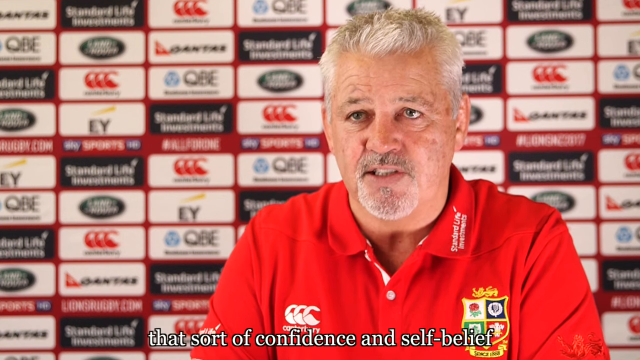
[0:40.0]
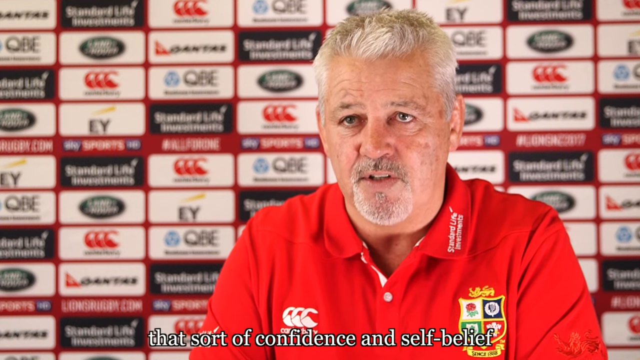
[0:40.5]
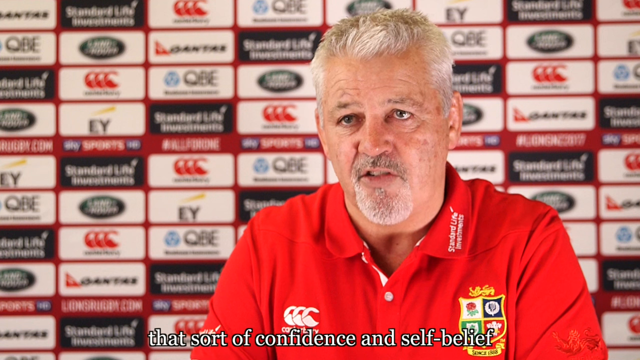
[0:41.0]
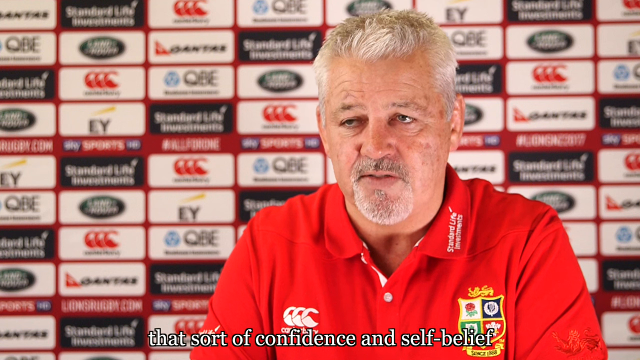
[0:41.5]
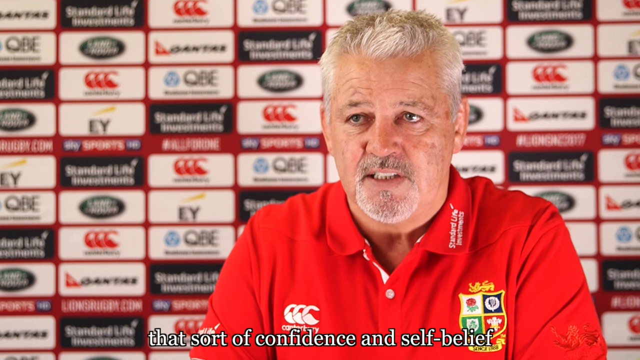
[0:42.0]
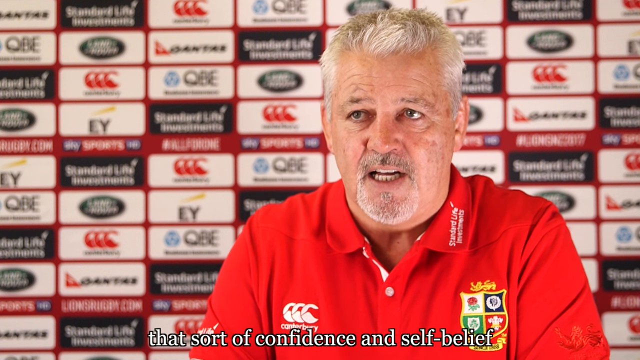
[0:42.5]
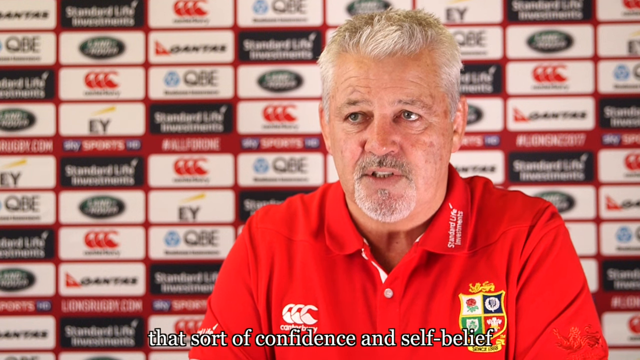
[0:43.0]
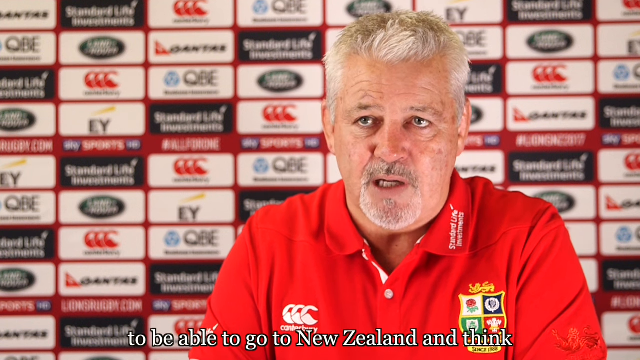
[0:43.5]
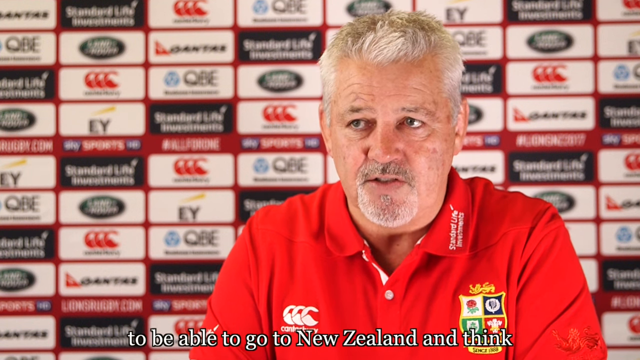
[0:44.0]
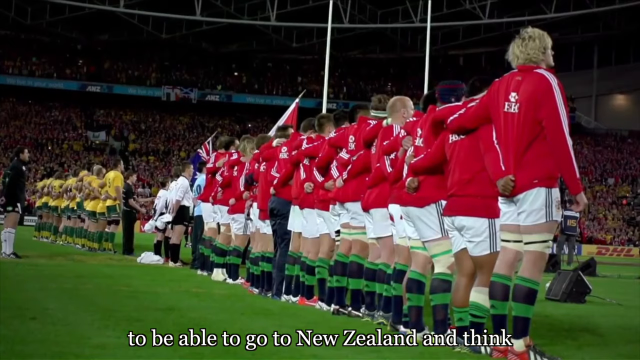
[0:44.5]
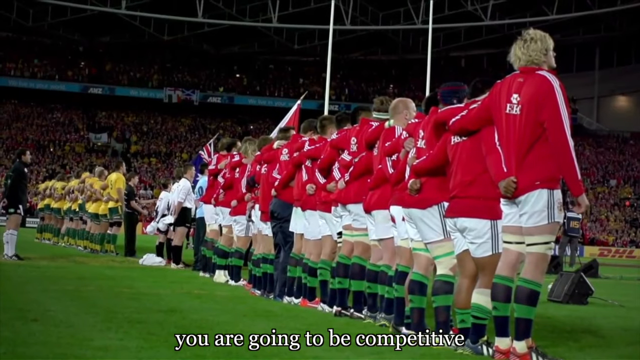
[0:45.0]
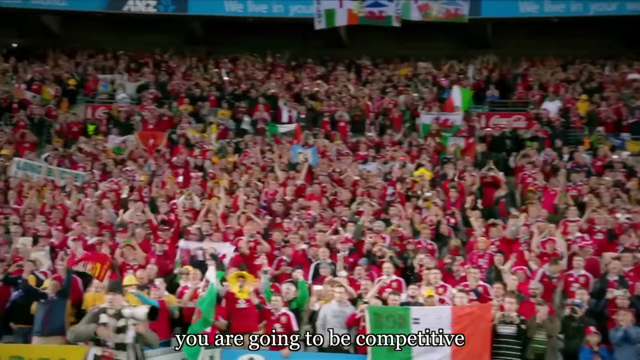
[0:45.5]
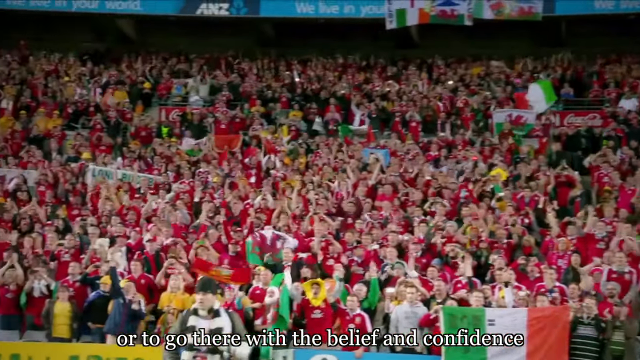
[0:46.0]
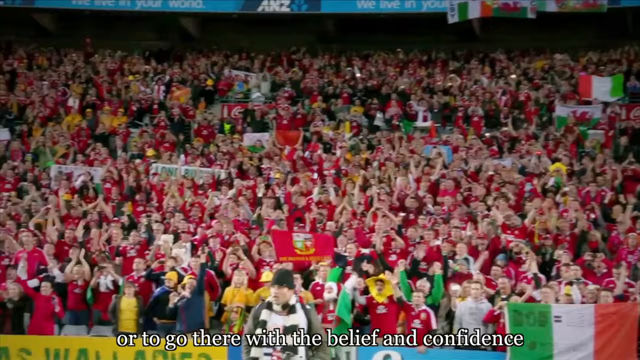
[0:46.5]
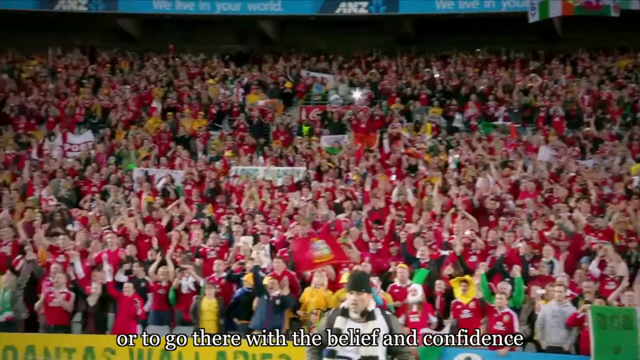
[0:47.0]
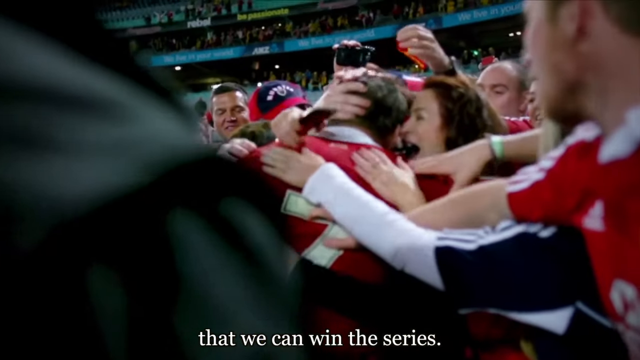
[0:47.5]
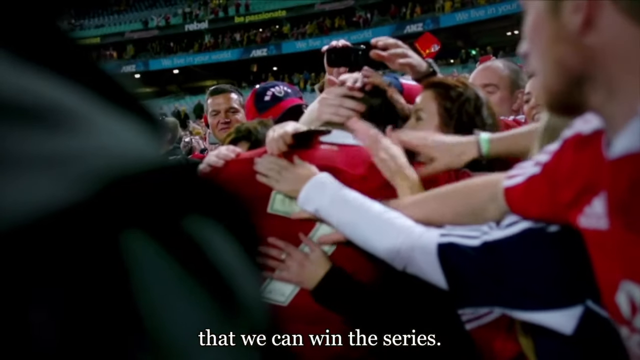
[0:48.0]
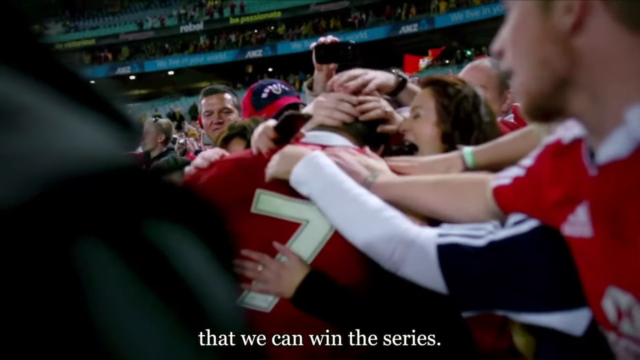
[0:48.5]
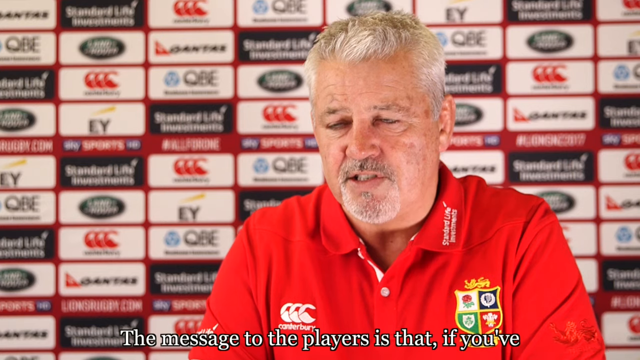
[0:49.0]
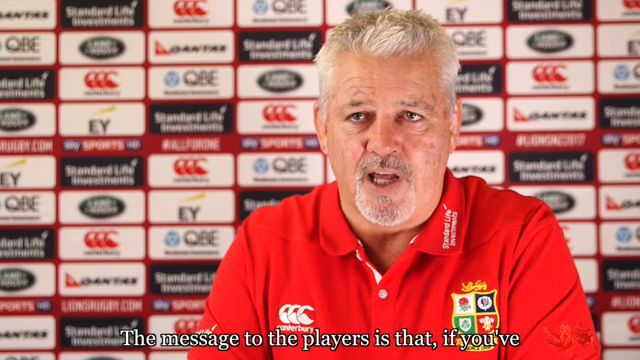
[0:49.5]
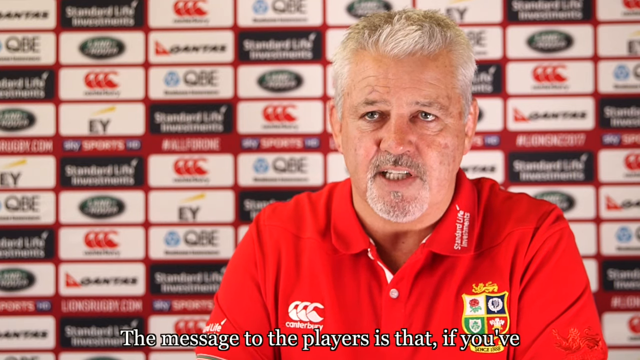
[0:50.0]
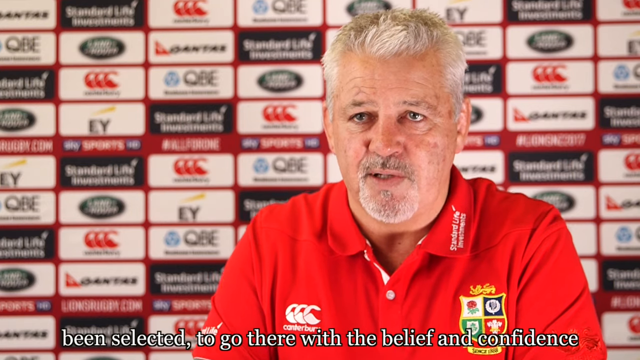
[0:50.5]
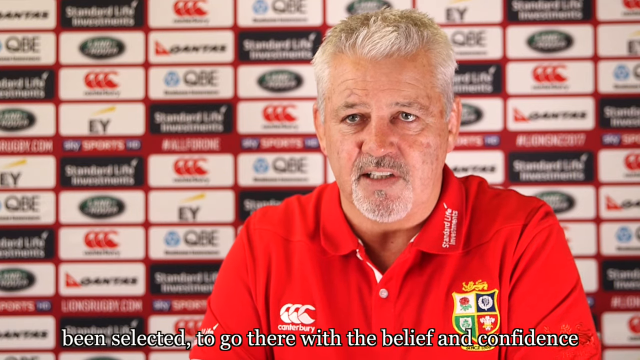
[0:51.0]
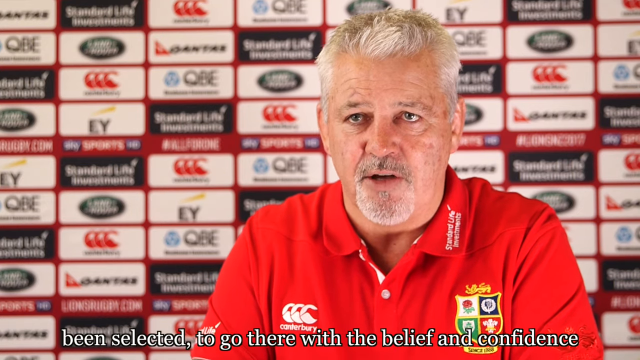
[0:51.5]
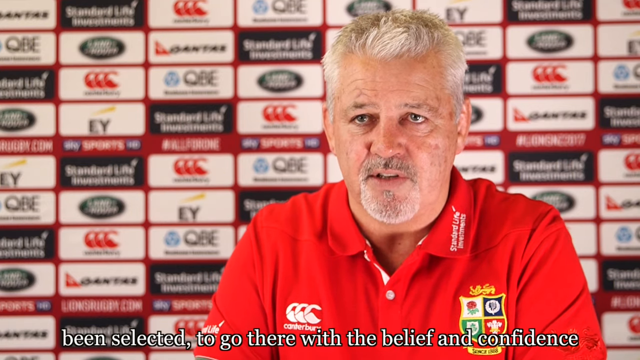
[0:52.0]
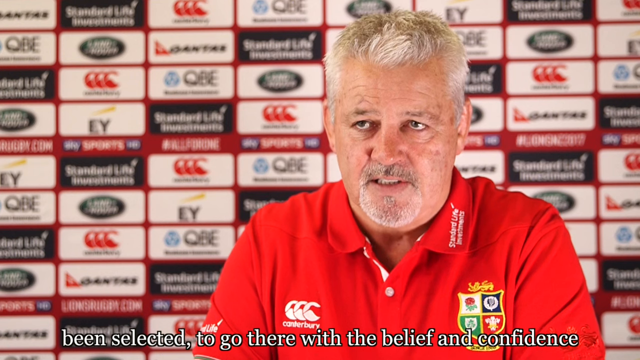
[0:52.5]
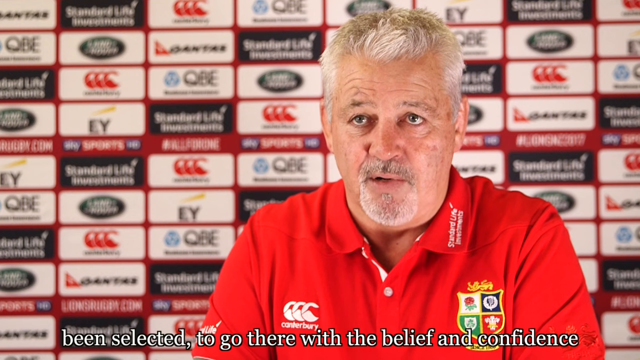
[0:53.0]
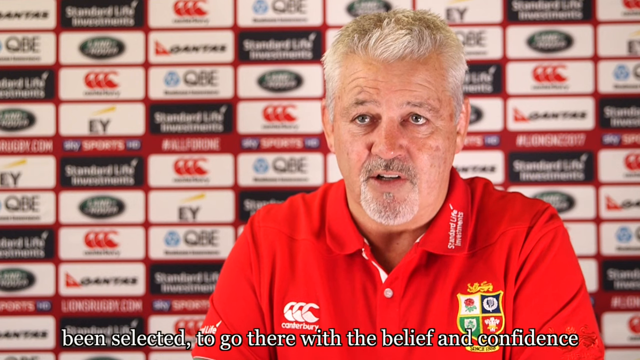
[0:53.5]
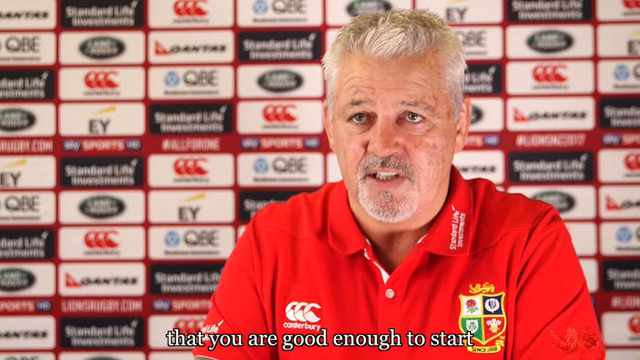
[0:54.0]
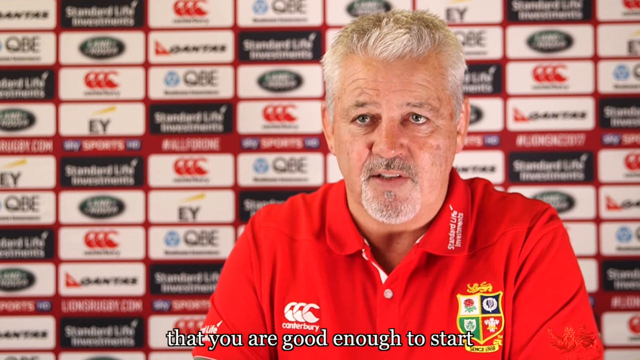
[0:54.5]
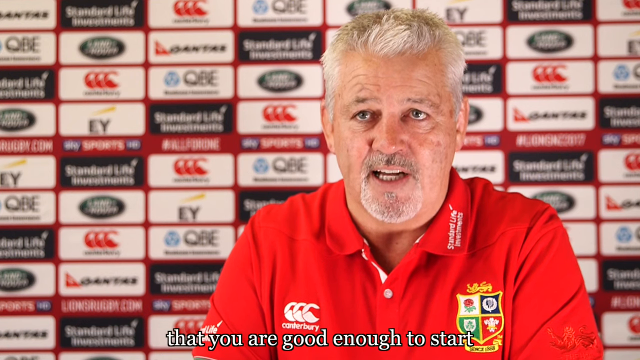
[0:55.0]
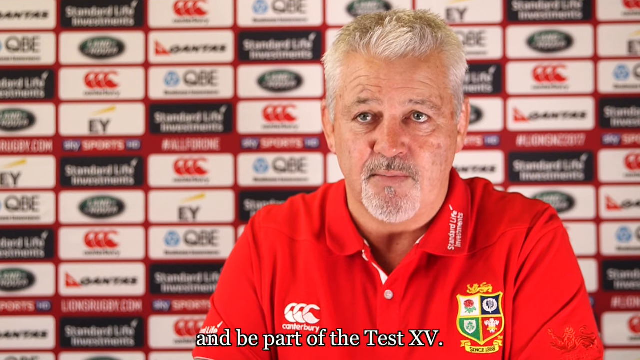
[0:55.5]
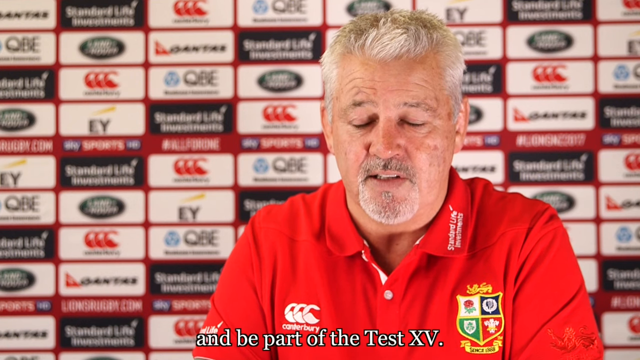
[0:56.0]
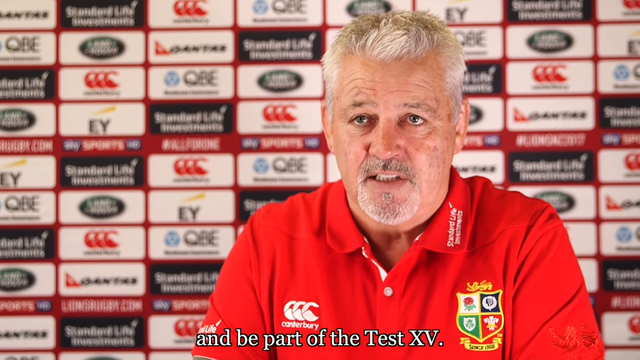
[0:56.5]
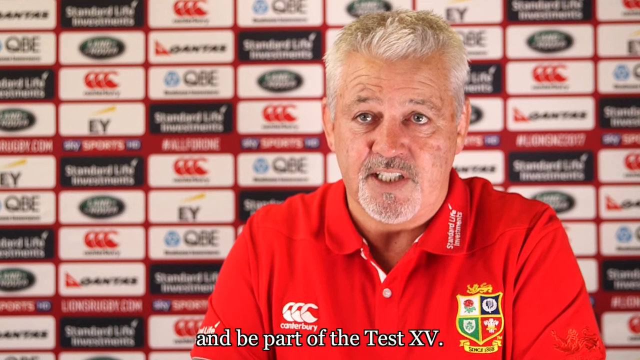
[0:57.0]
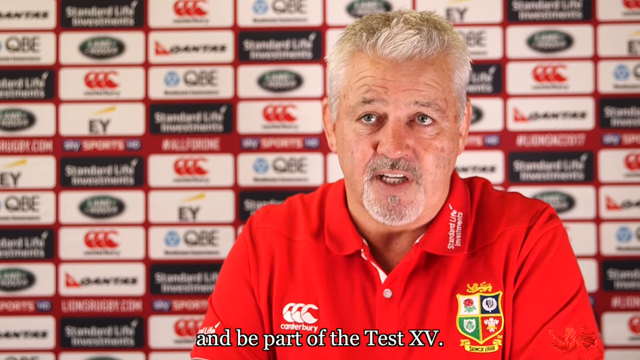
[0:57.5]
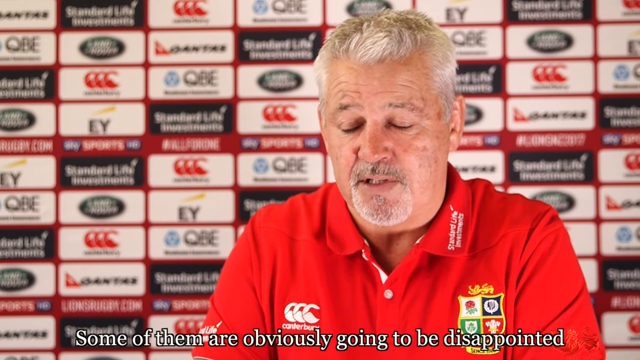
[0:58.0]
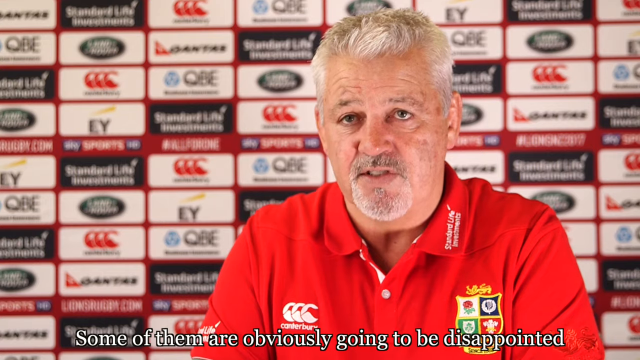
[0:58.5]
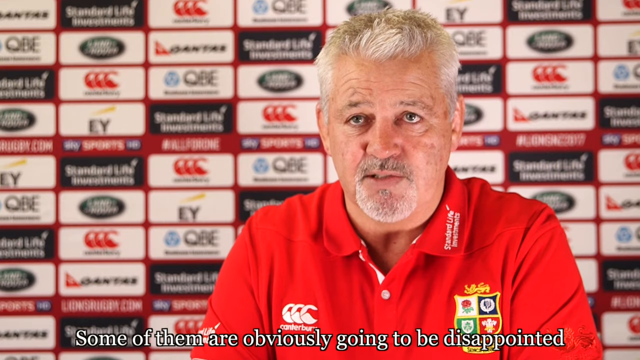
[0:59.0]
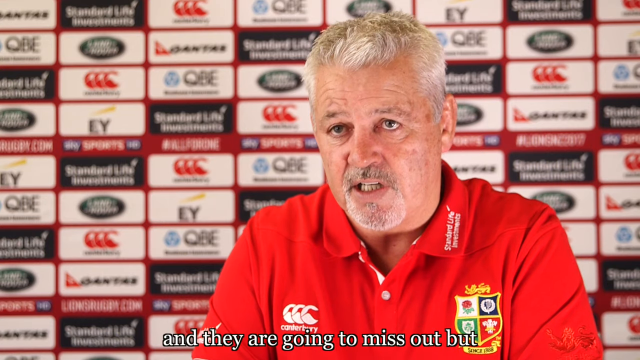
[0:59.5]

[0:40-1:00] The middle-aged man with gray hair, seemingly in his 50s or late 50s, is still alone in the interview. He wears his team's logo. The scene apparently changes three times, showing him, the crowd, and the team singing the national anthem and winning. His seating does not change, the same sponsors remain in the background, and he seems to be there just for an interview.